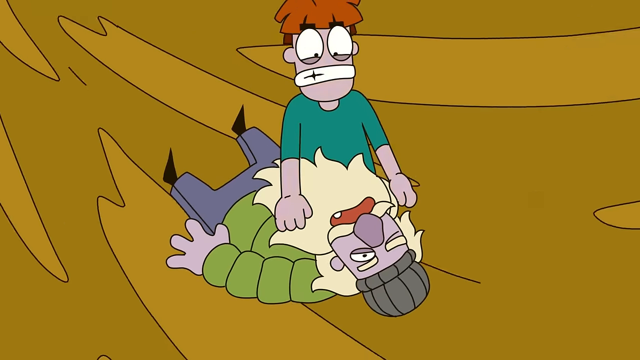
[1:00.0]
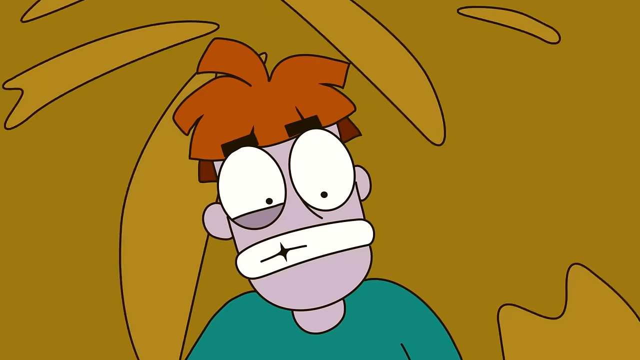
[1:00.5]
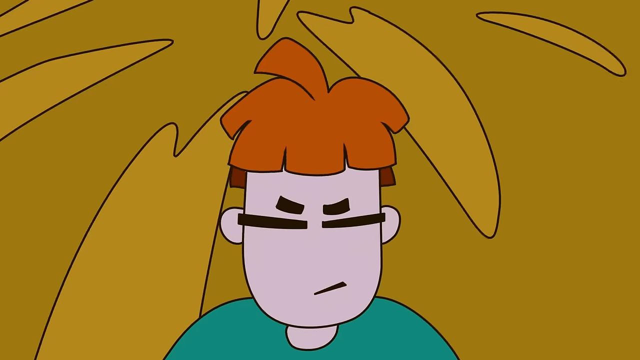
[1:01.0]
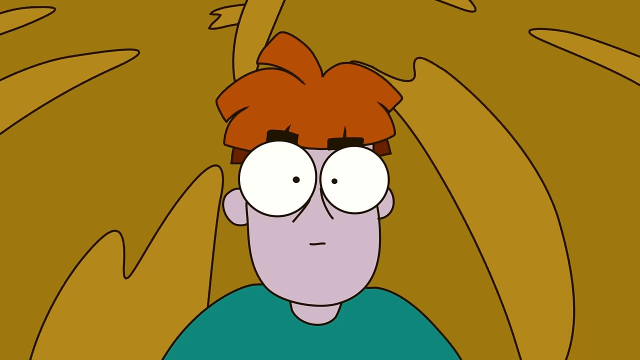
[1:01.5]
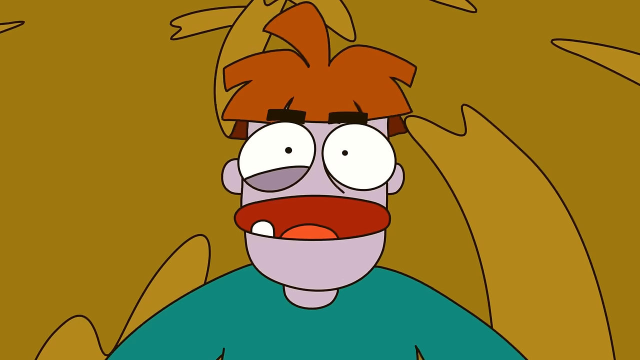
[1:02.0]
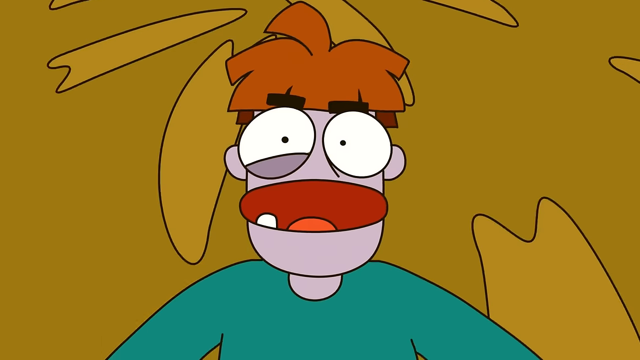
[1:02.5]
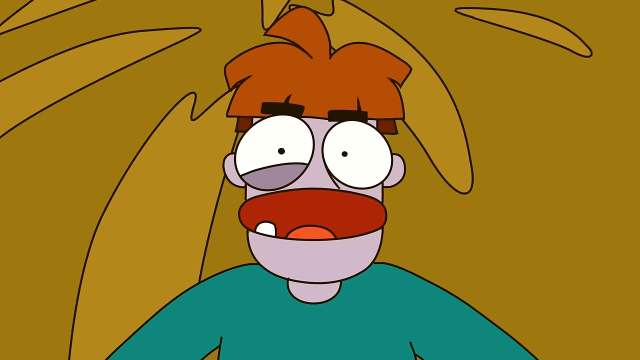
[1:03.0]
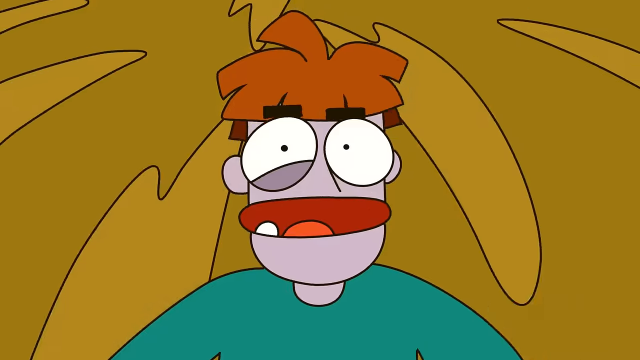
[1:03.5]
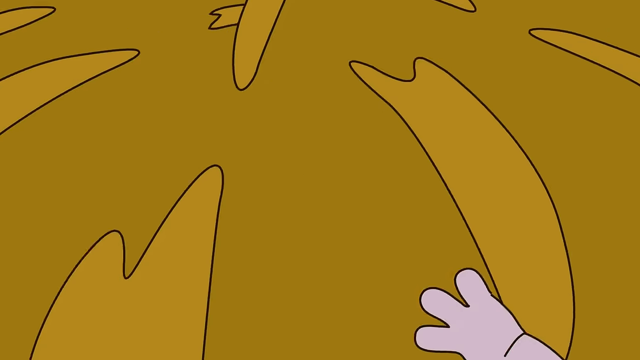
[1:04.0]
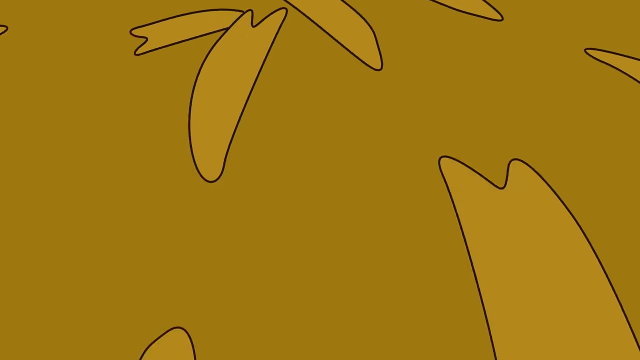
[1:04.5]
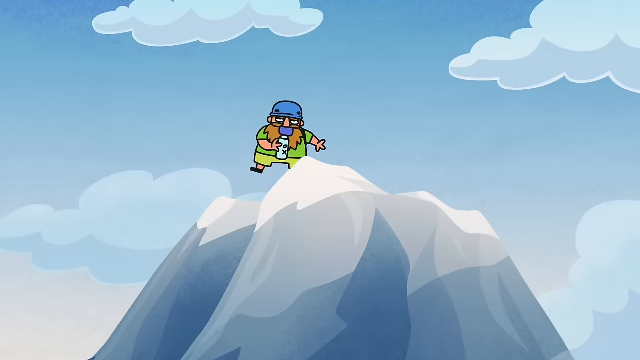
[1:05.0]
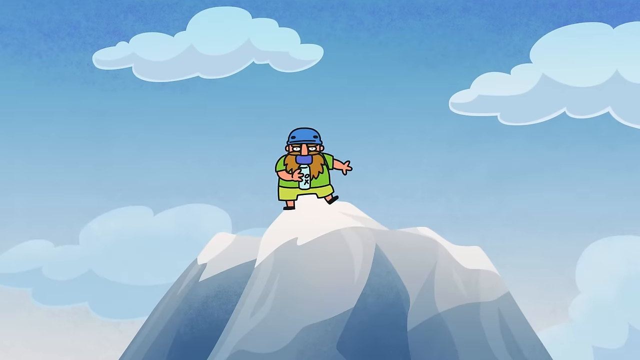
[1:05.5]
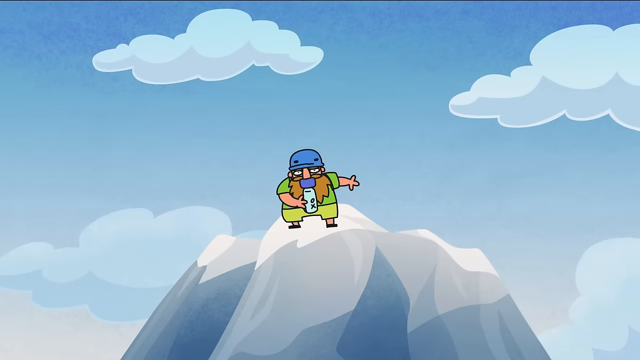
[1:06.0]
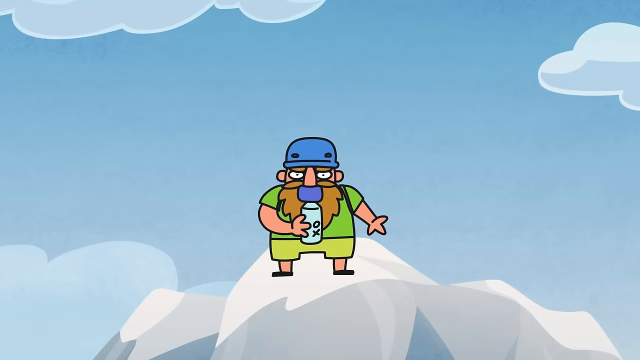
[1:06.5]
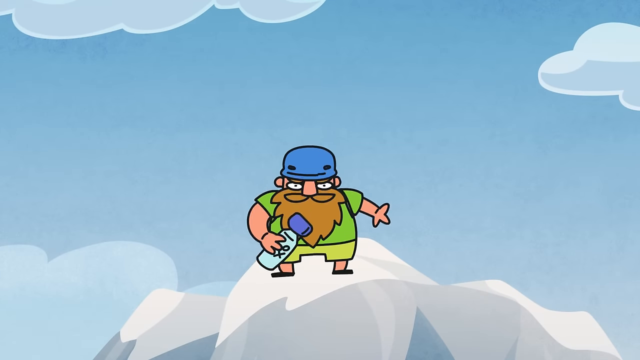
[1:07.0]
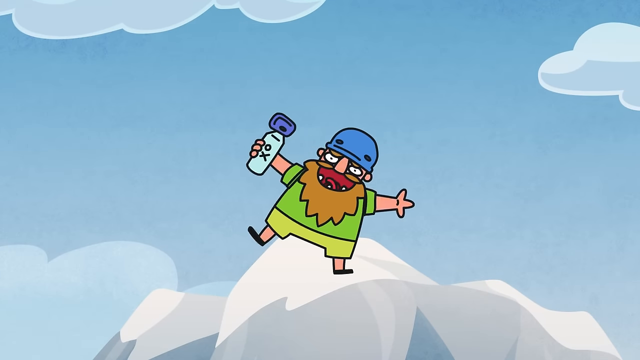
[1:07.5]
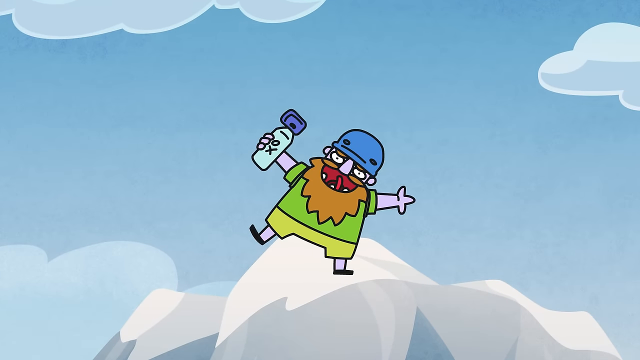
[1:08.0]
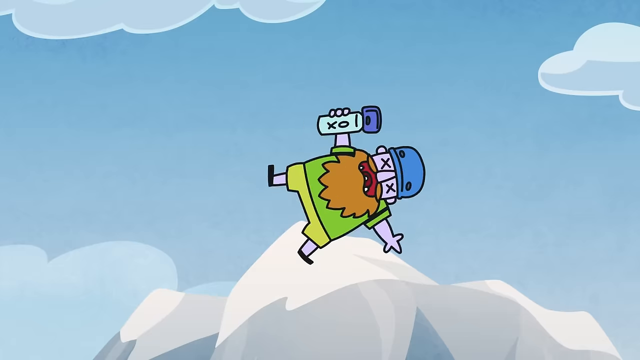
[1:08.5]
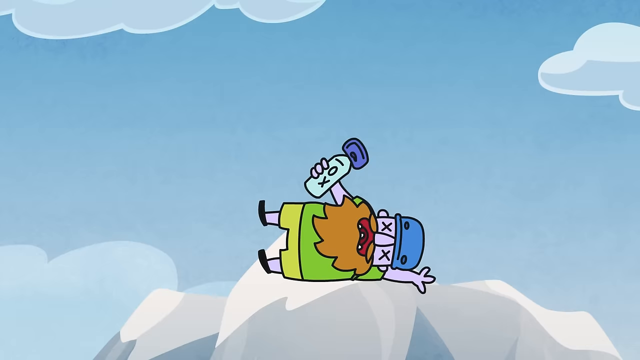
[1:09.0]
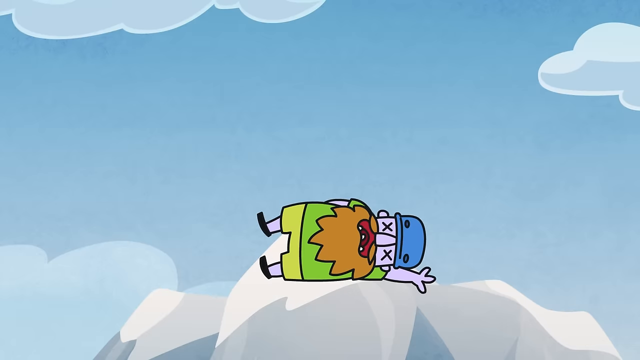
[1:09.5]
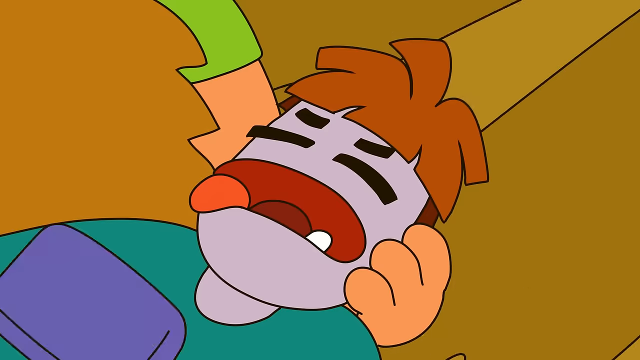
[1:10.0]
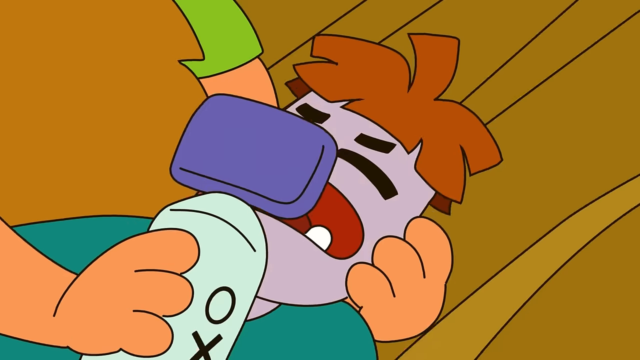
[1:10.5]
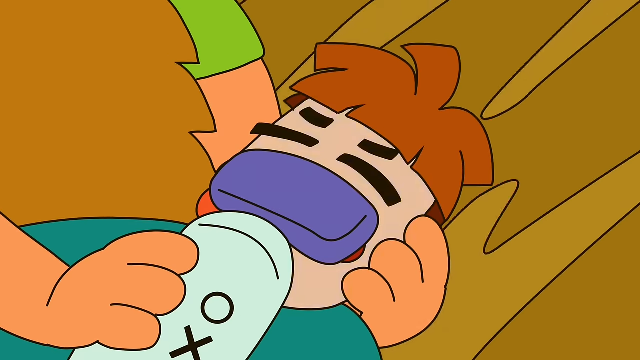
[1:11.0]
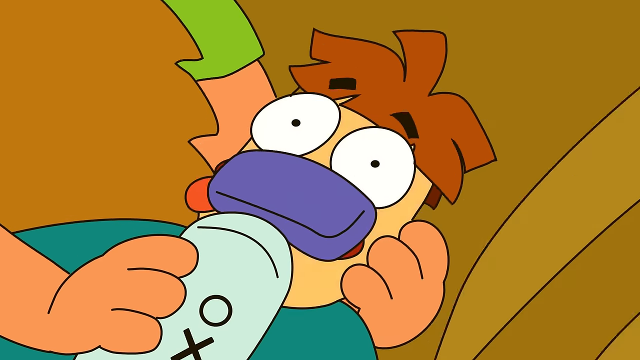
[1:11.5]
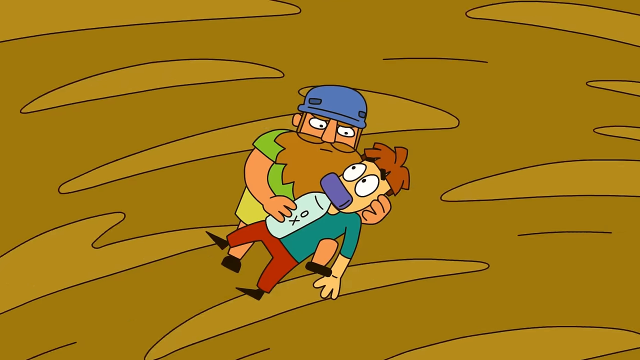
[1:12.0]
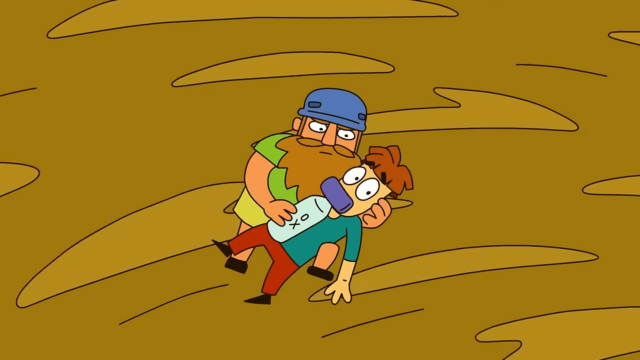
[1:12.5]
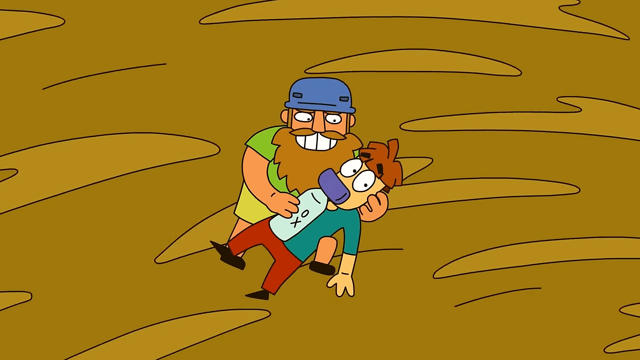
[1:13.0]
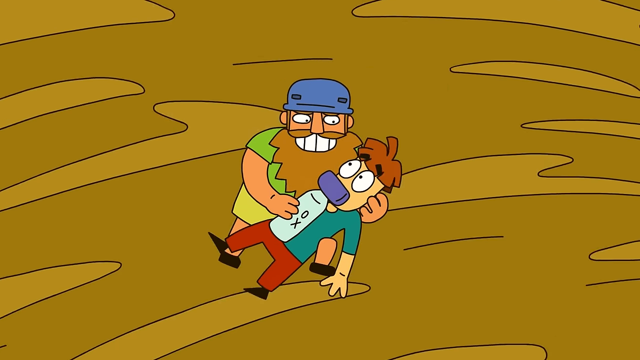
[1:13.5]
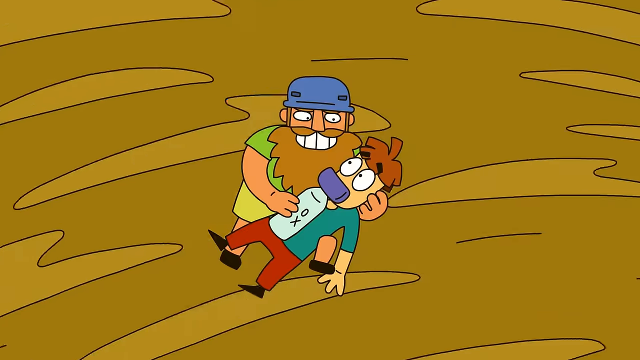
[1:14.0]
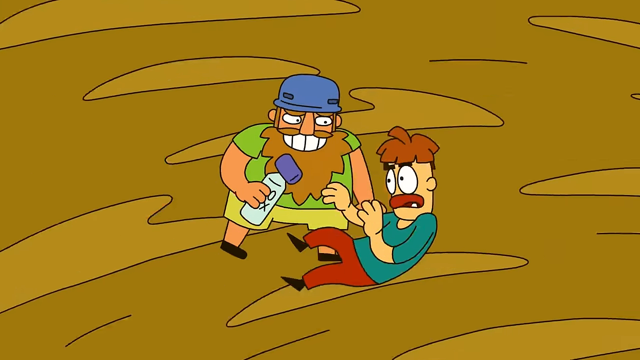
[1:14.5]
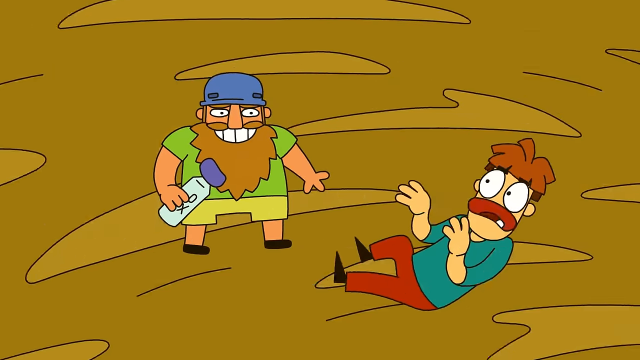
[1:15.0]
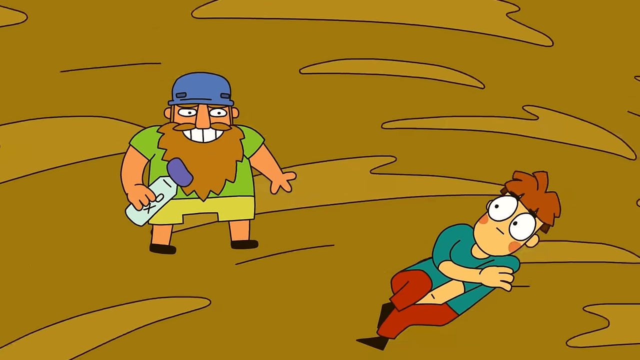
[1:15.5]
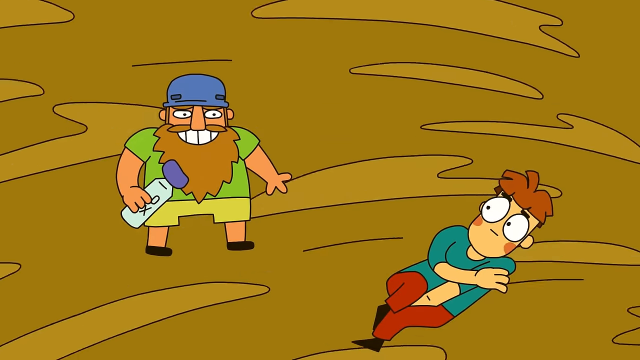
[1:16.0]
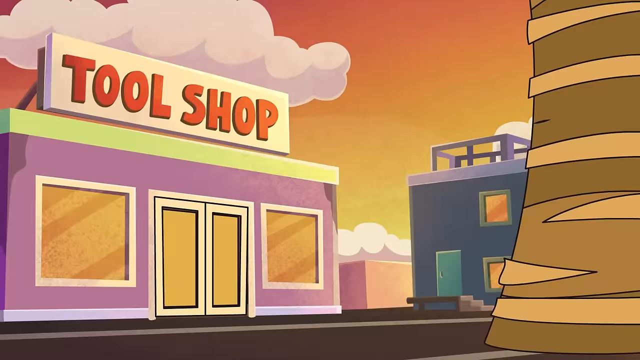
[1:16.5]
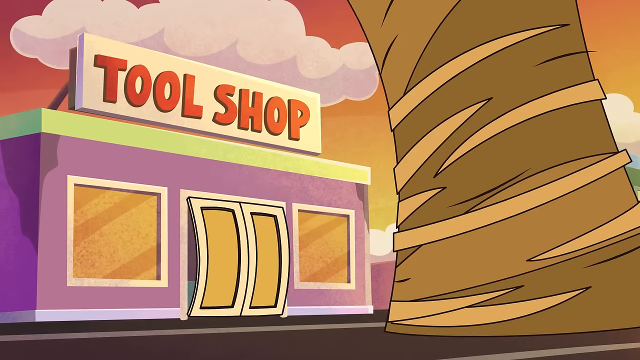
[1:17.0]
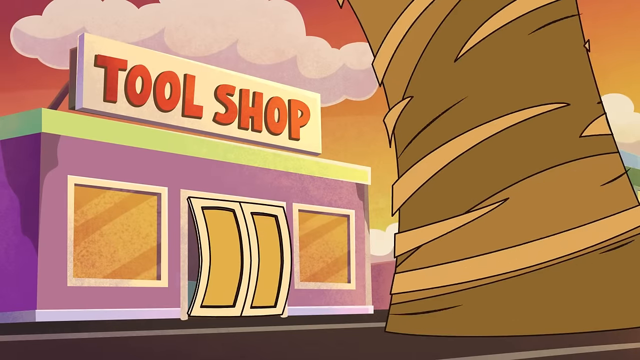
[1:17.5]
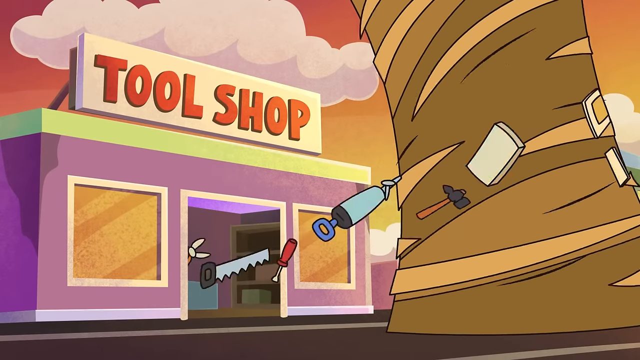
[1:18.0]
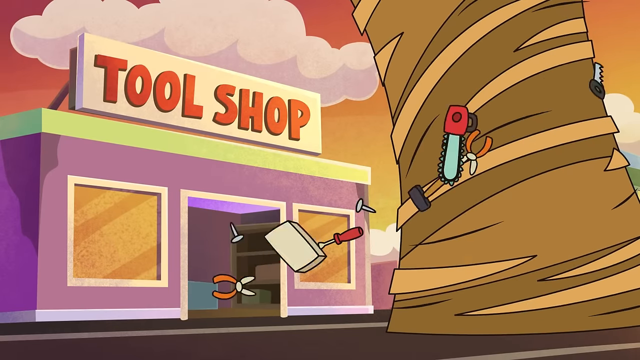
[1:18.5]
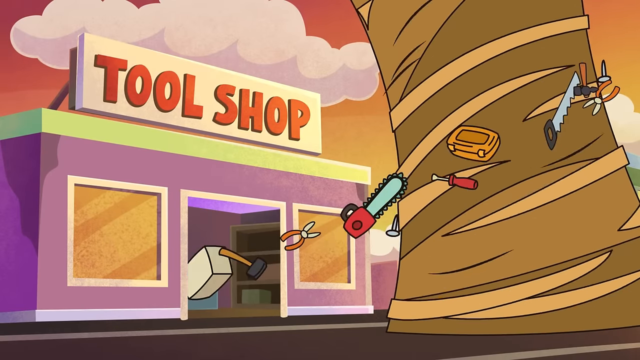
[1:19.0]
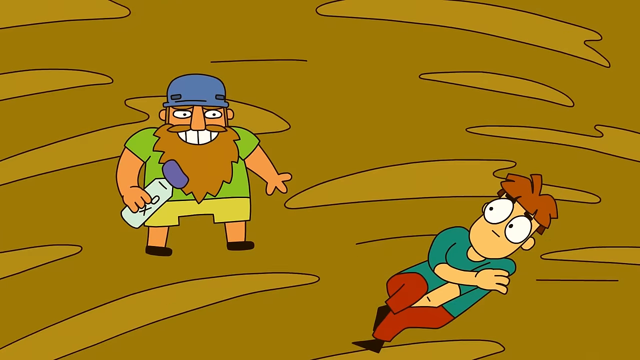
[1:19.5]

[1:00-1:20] Two cartoon characters are shown. The one in the top middle of the screen has brownish hair and an aqua green short-sleeved shirt and is over another man with purple skin, who wears a green puffer jacket, purplish pants, black shoes and what appears to be a gray sock hat. The two seem to be floating around inside a tornado. The scene changes to another cartoon character at the top of a mountain peak that is white, gray and dark gray, with a blue sky and three puffy clouds behind him. The character opens his mouth, sticks his tongue out and holds his arms out at his sides, with some kind of bottle in his right hand. He has purple skin and appears to pass out or die. Next, a character with brown hair and a green shirt is given a bottle of some kind of substance, maybe oxygen, by somebody. He was purple, but after a dose from the bottle he turns back to a normal, yellow-like color.